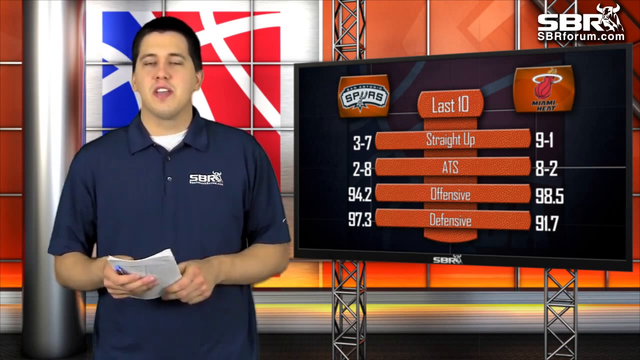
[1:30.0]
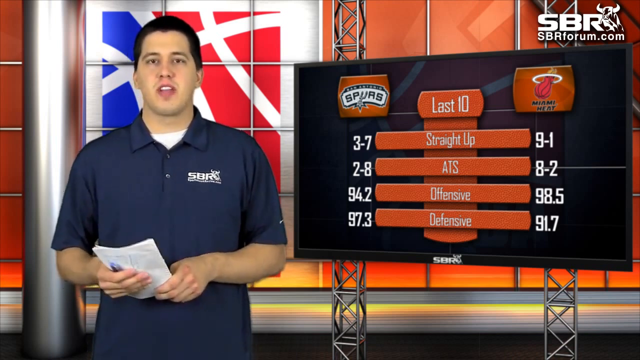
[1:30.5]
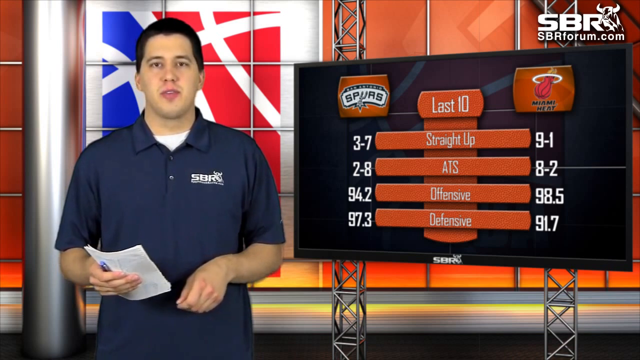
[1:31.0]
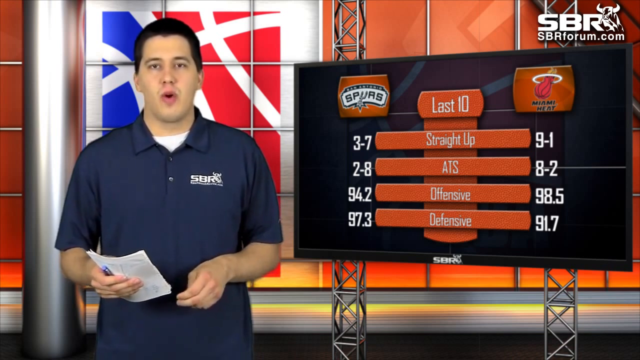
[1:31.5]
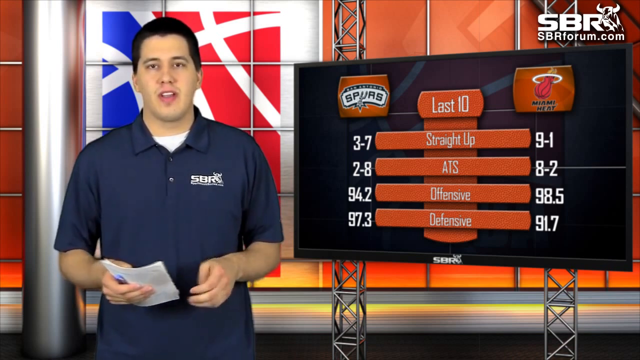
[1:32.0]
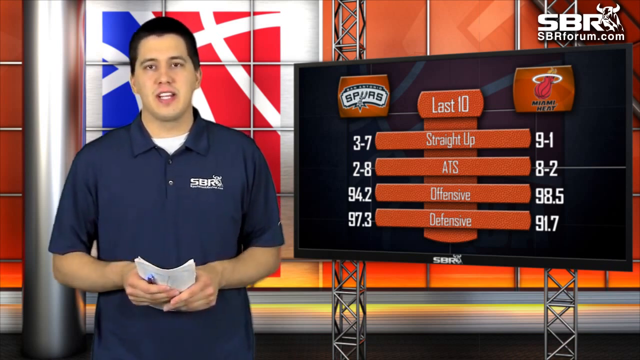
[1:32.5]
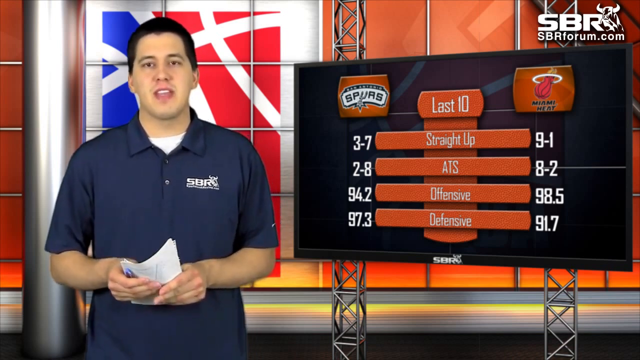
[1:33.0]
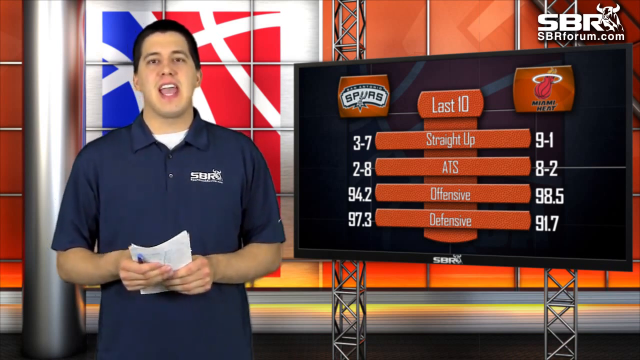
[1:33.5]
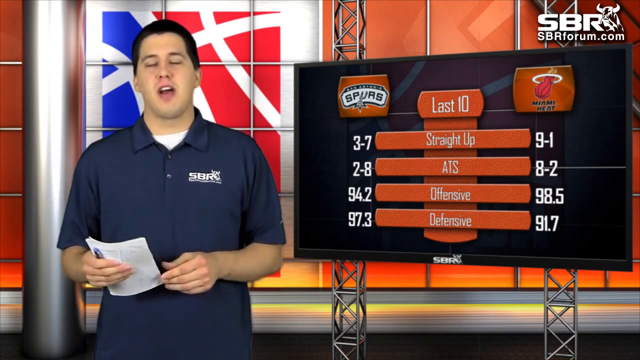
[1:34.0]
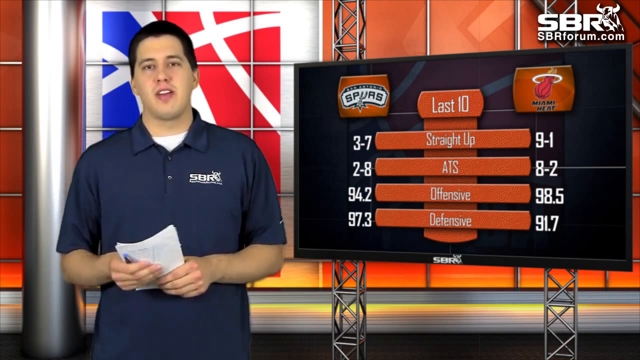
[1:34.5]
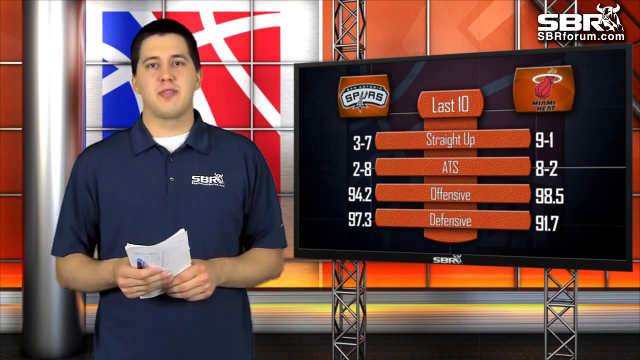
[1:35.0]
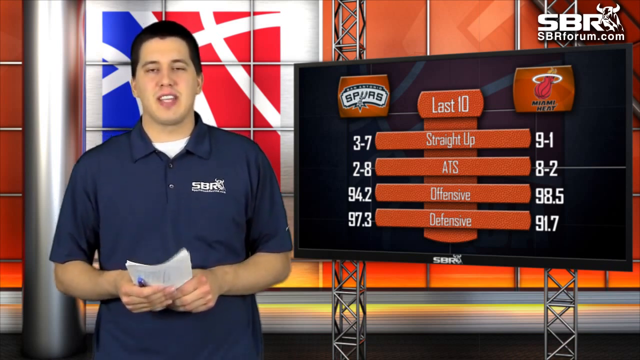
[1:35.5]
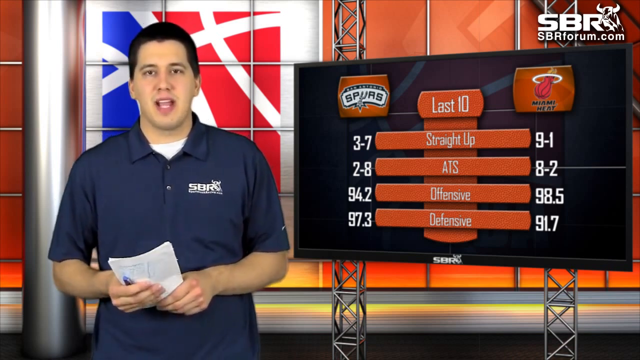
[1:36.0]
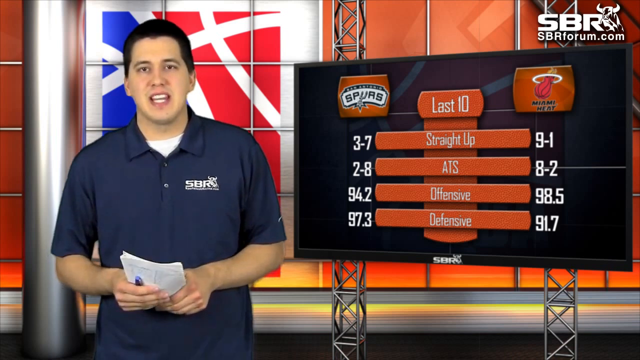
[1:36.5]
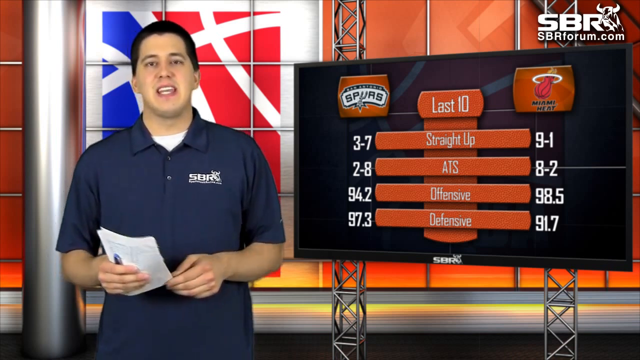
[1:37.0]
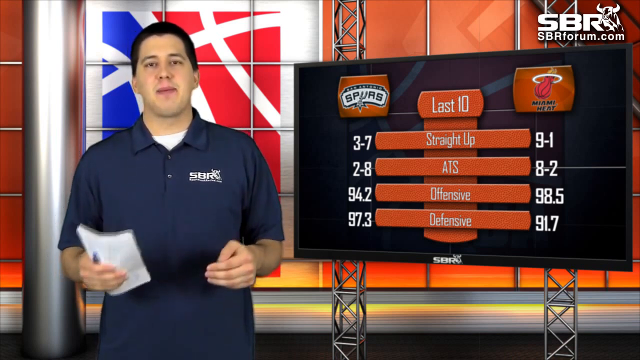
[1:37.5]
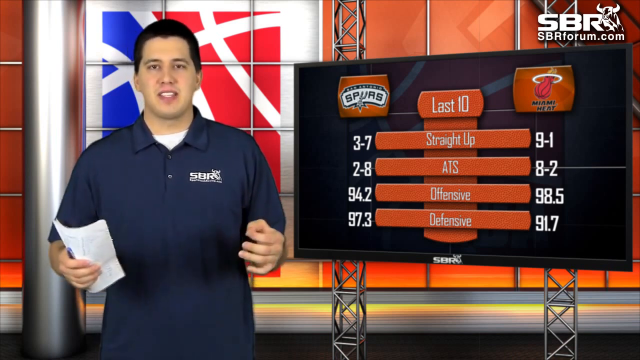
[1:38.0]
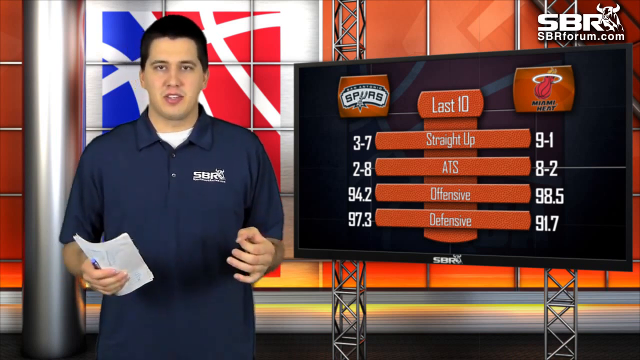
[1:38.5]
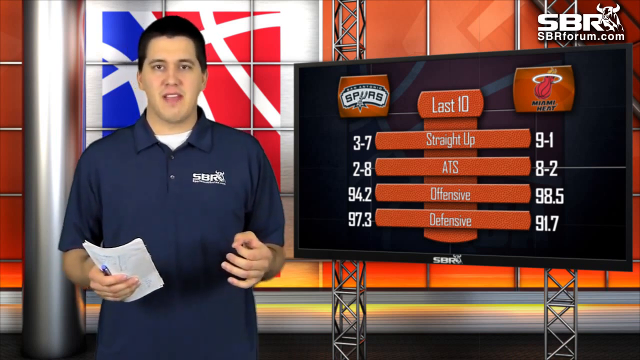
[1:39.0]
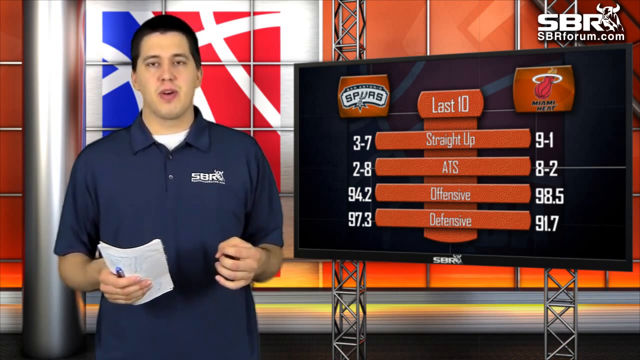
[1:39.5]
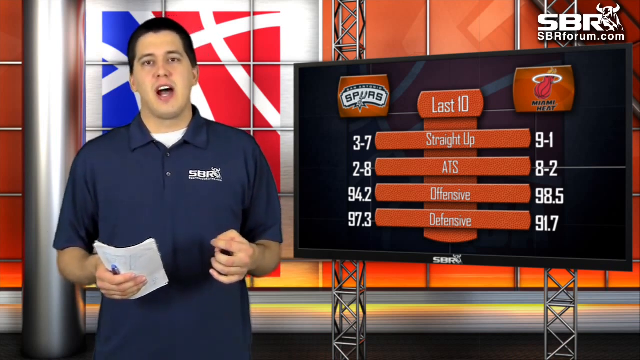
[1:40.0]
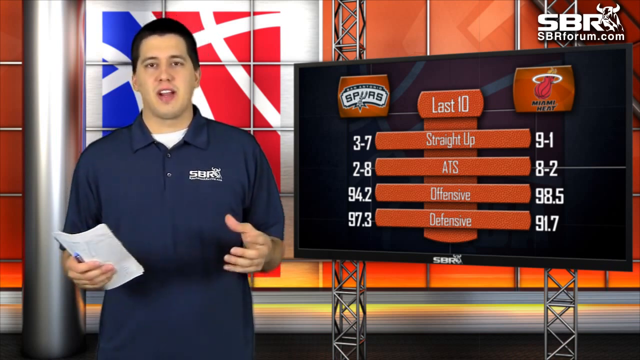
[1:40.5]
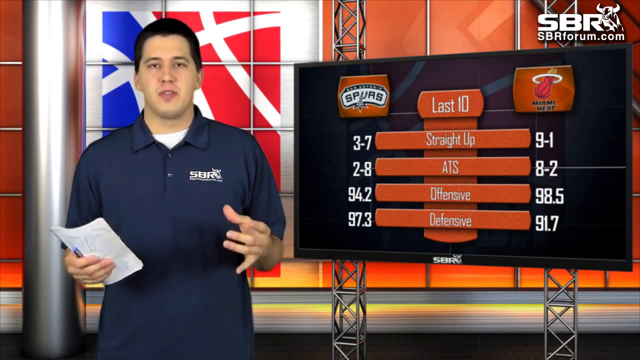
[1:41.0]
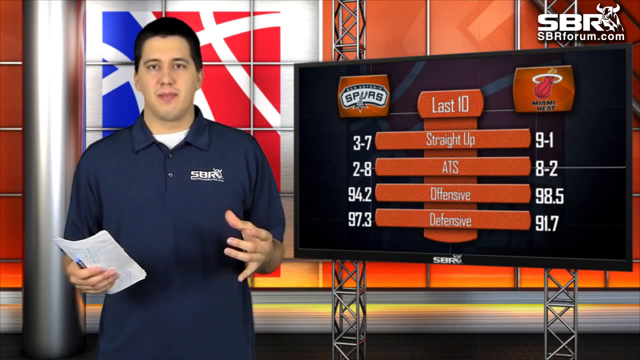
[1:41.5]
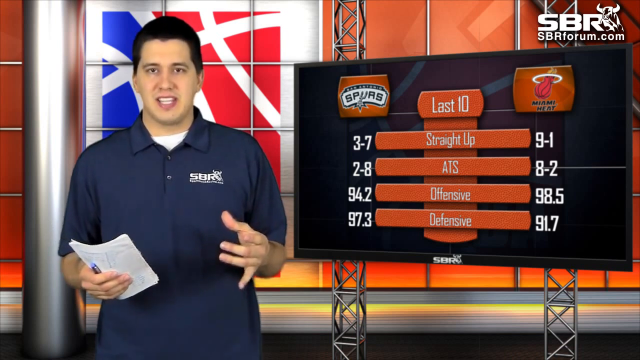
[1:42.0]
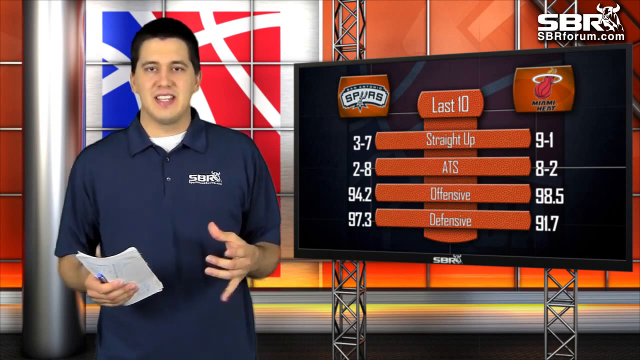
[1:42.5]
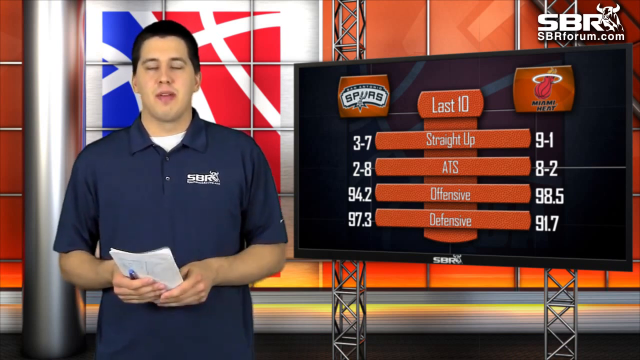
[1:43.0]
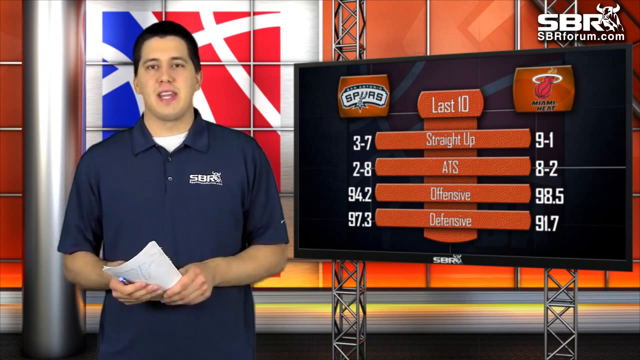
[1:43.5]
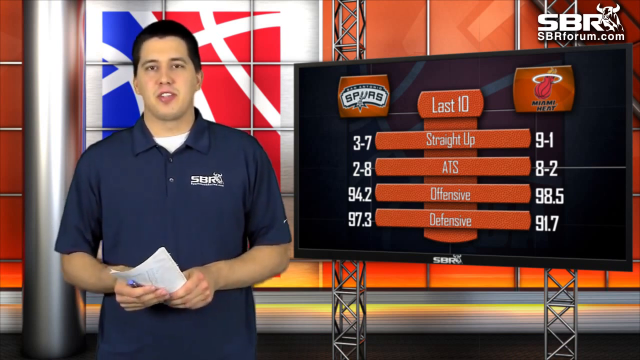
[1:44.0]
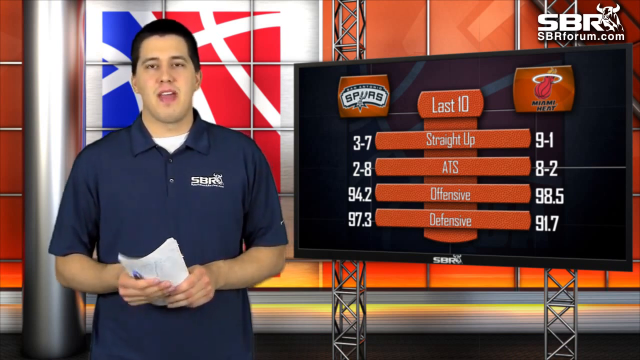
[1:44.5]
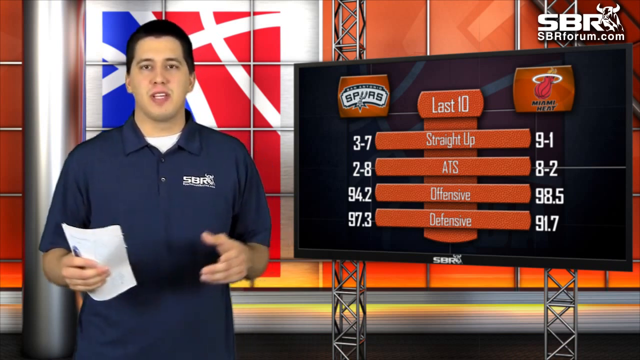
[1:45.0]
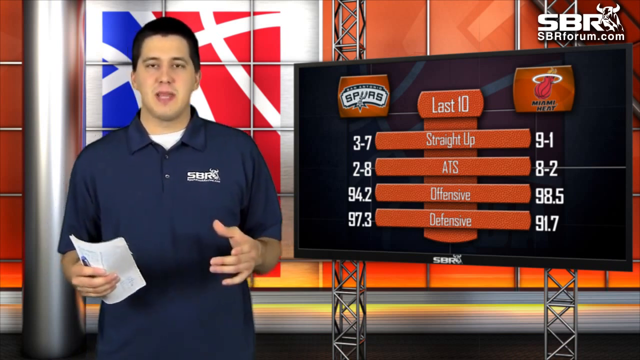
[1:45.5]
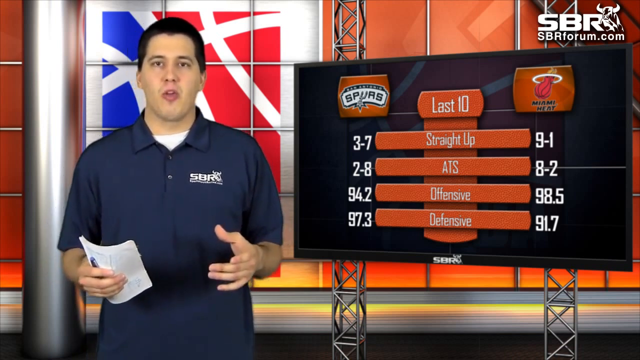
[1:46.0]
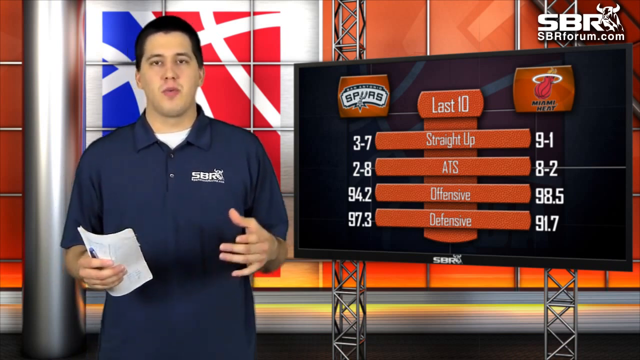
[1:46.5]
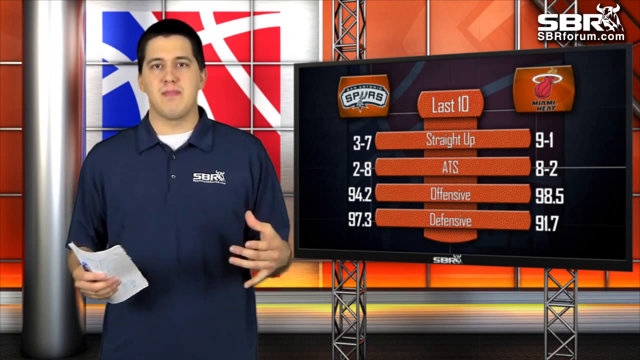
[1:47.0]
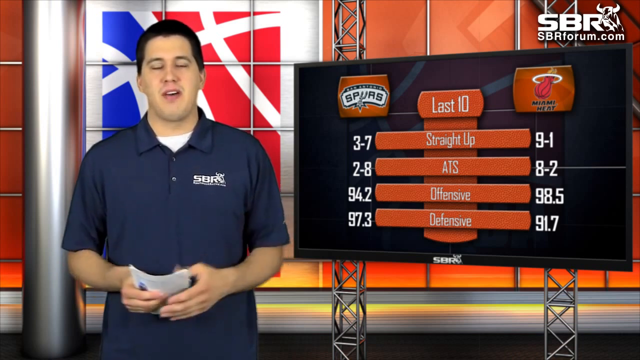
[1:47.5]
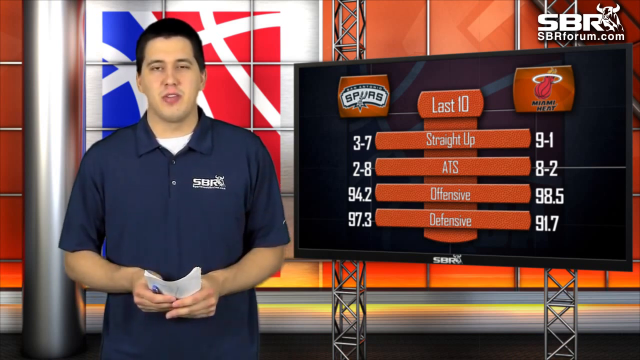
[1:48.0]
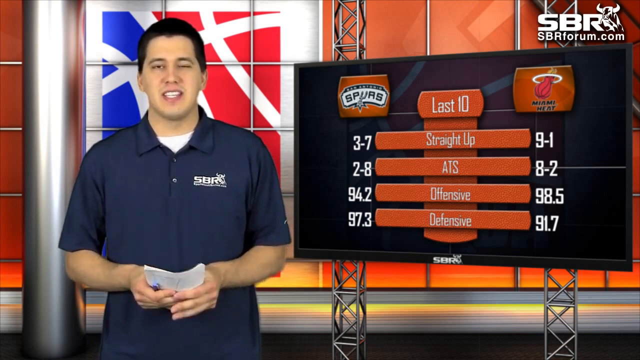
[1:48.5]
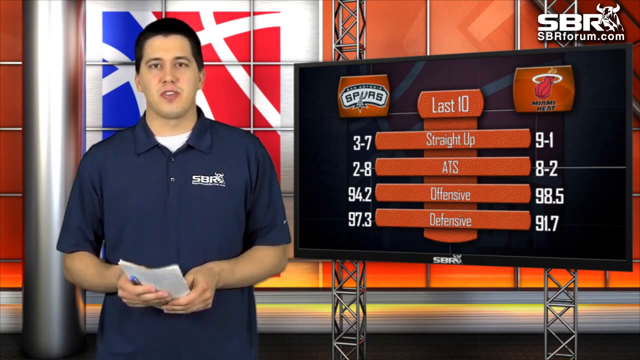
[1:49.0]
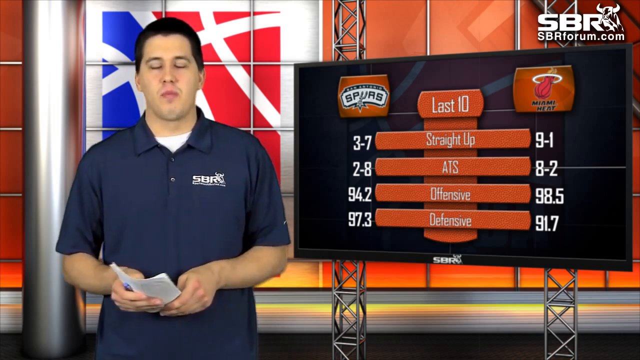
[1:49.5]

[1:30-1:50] A man walks out of the screen. On the right side of the screen, text reads "straight up, ATS, offensive, and defensive" on four orange lines, and San Antonio is shown competing against the Miami Heat. The top right of the screen says "SBRForum.com," and there is also a logo drawn in white. On the left side of the screen is a red basketball outline.